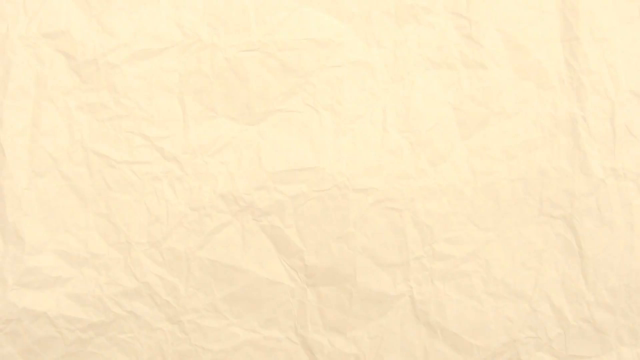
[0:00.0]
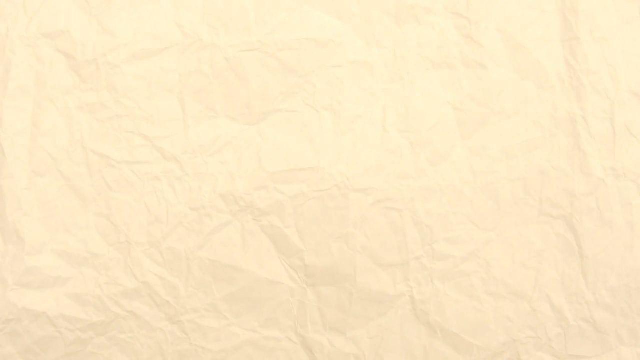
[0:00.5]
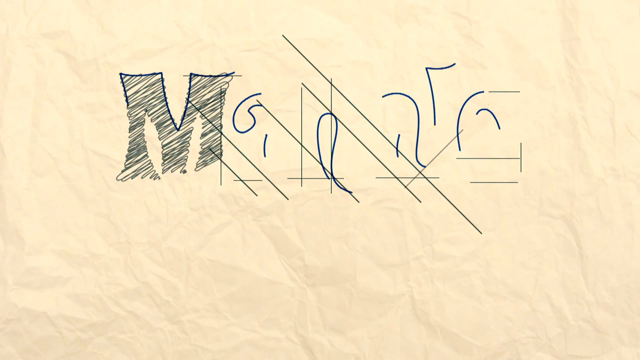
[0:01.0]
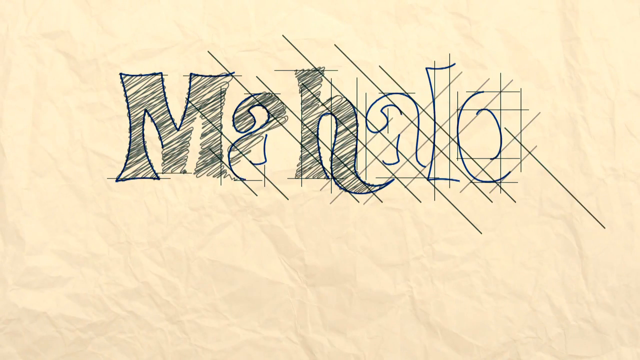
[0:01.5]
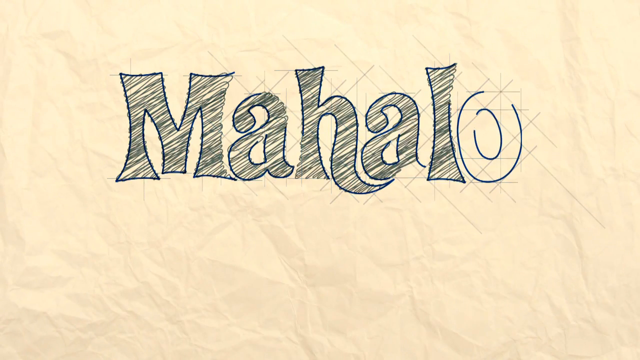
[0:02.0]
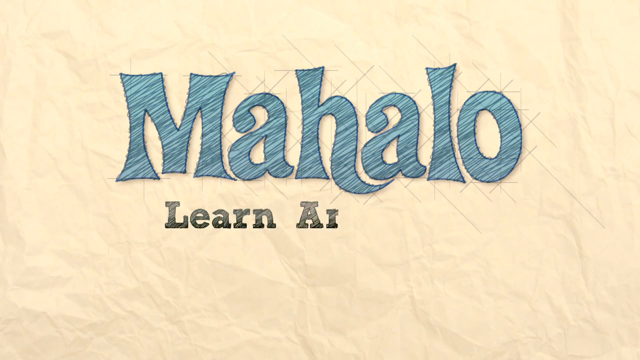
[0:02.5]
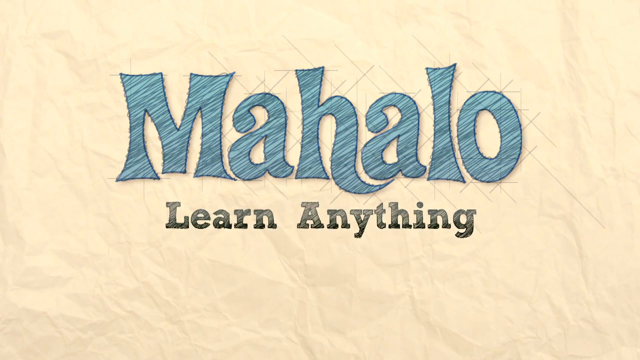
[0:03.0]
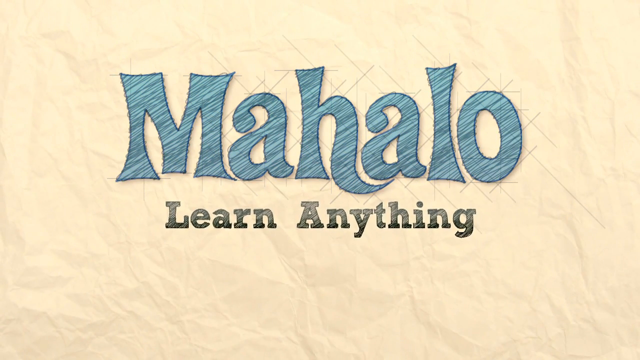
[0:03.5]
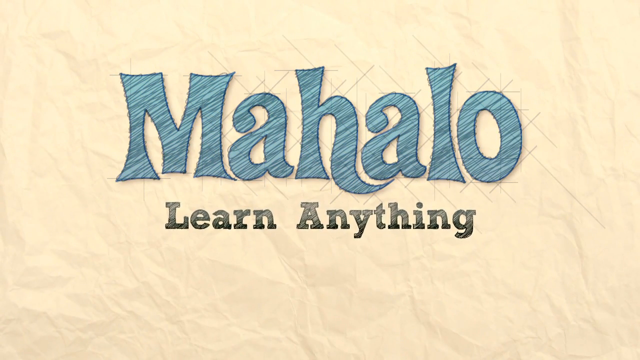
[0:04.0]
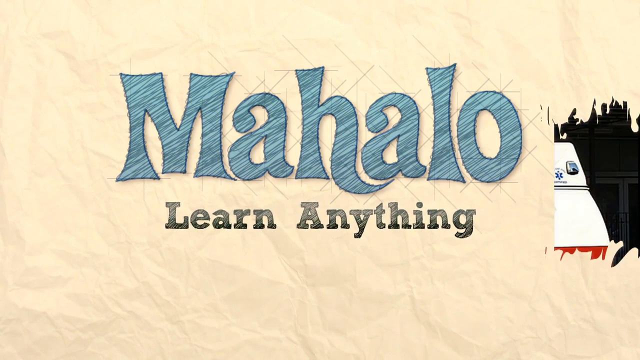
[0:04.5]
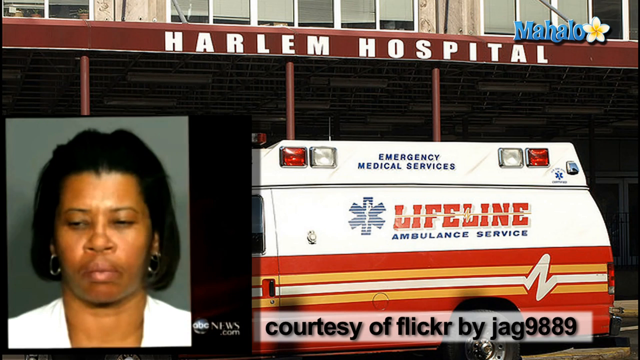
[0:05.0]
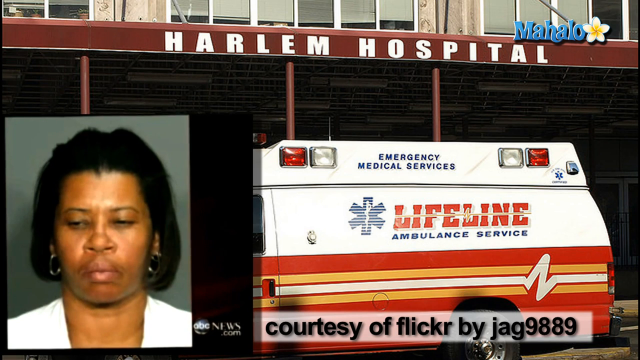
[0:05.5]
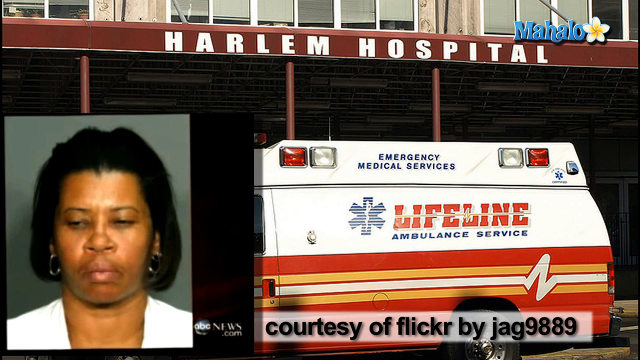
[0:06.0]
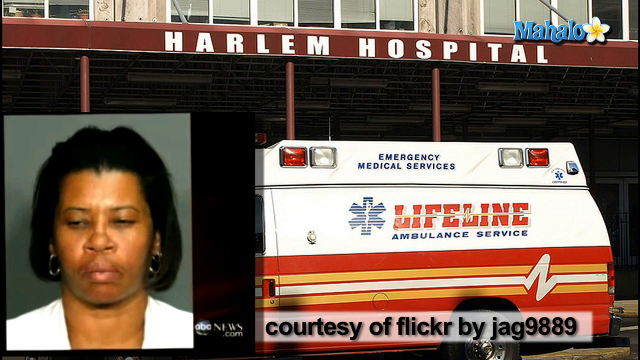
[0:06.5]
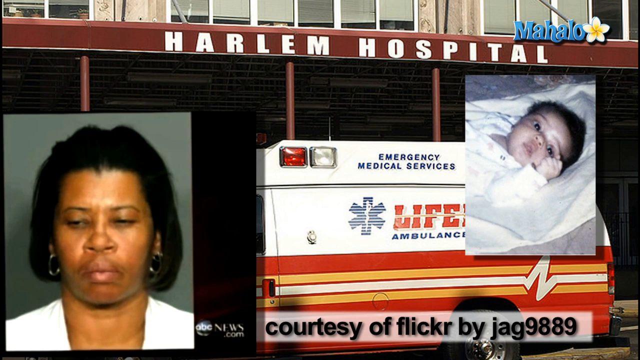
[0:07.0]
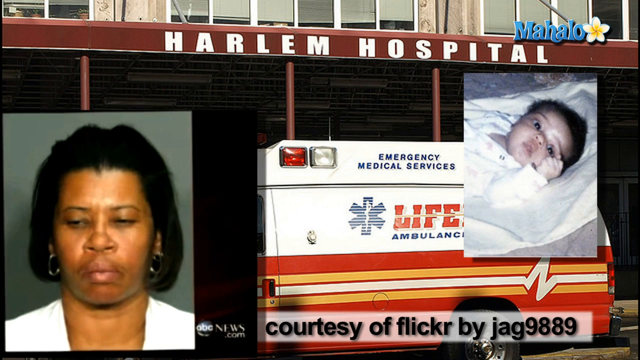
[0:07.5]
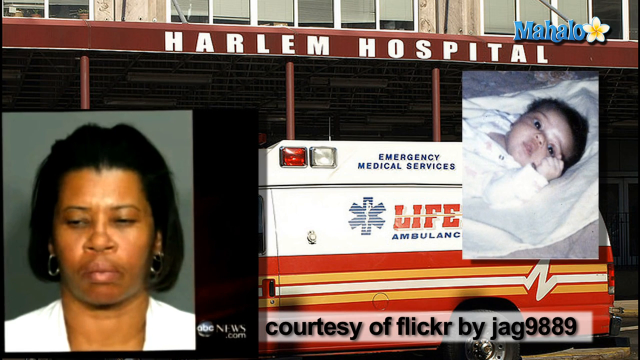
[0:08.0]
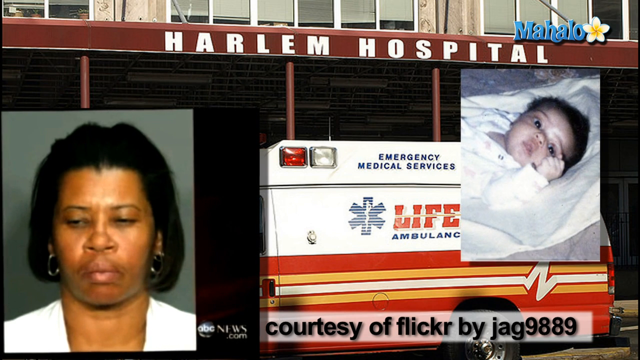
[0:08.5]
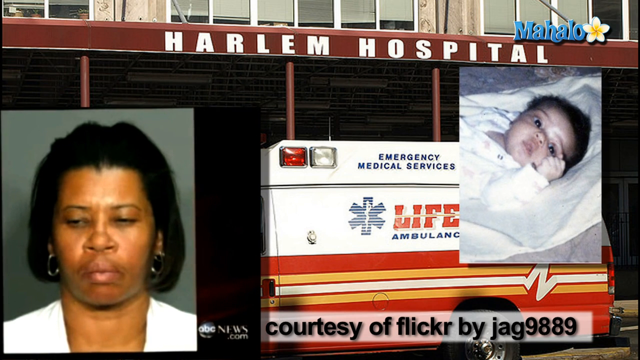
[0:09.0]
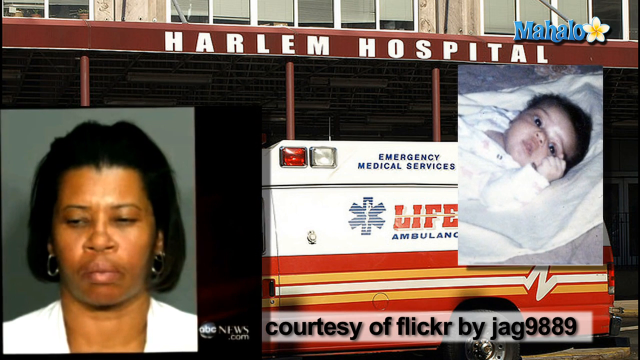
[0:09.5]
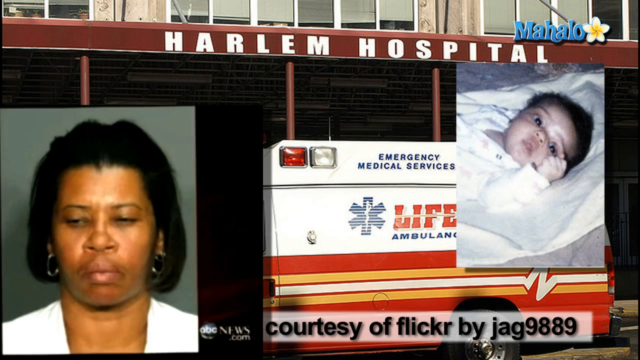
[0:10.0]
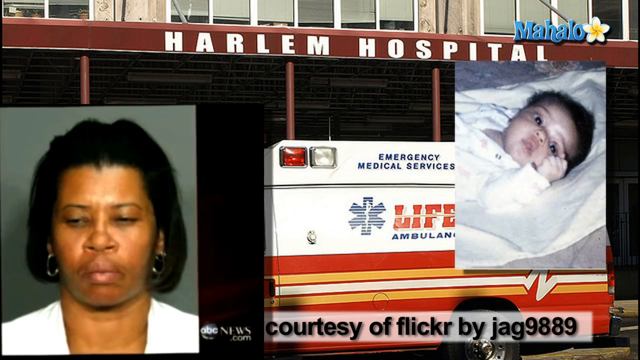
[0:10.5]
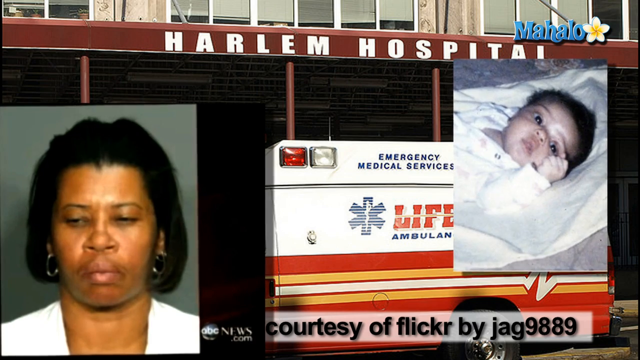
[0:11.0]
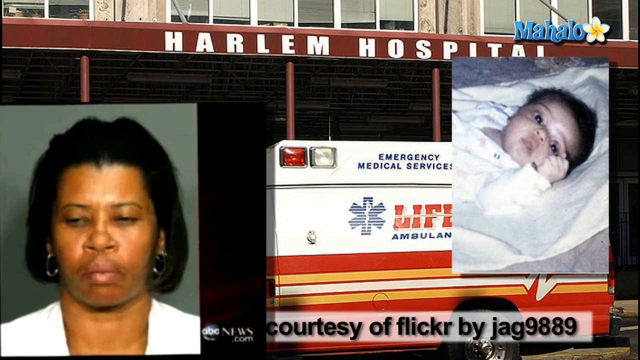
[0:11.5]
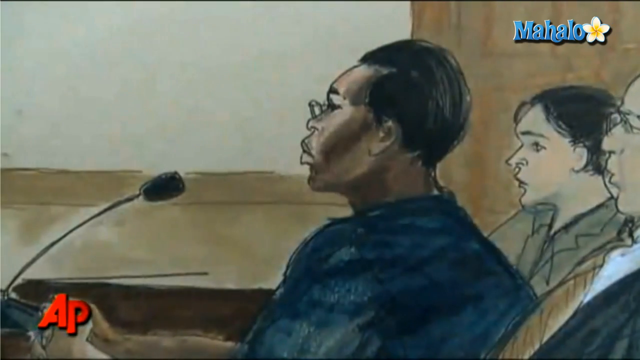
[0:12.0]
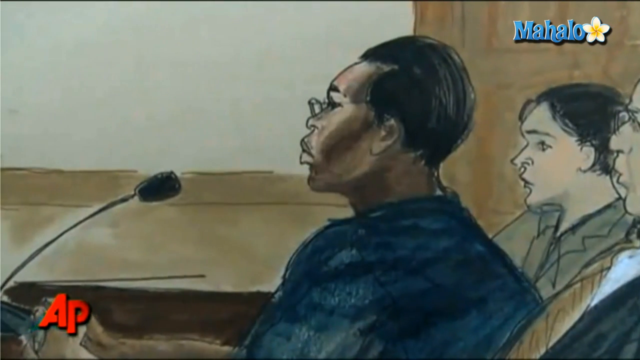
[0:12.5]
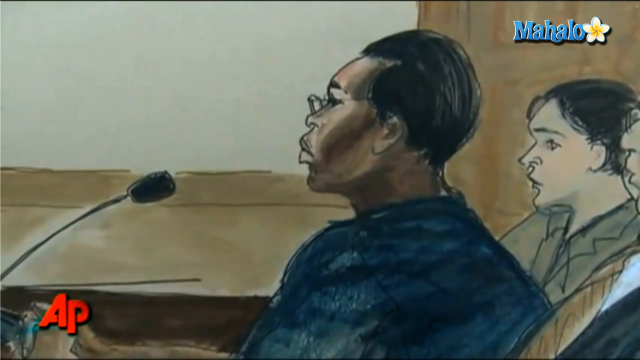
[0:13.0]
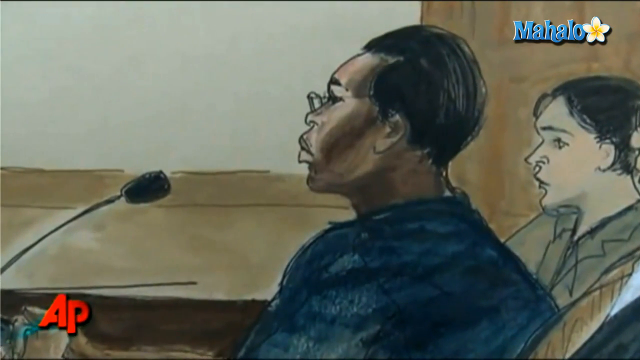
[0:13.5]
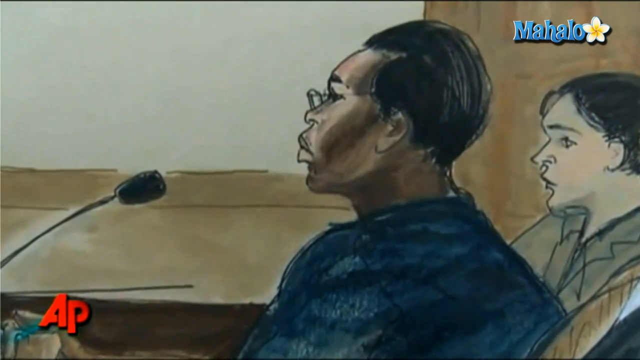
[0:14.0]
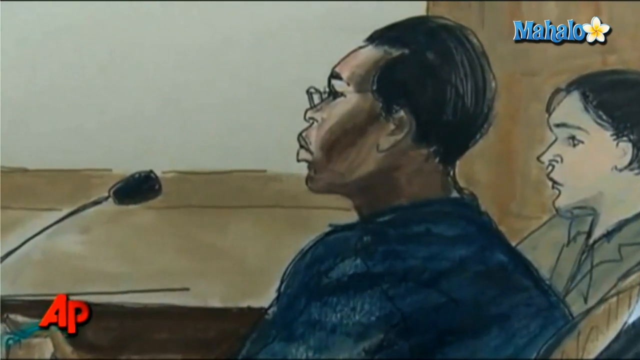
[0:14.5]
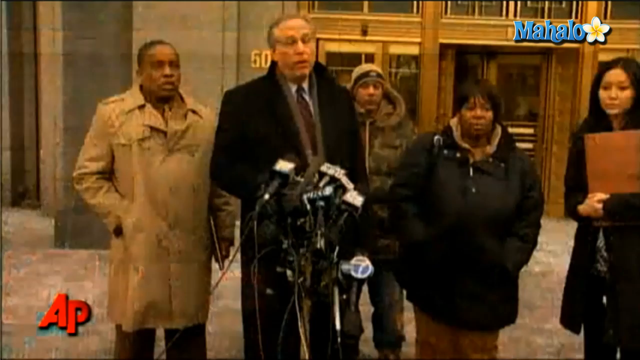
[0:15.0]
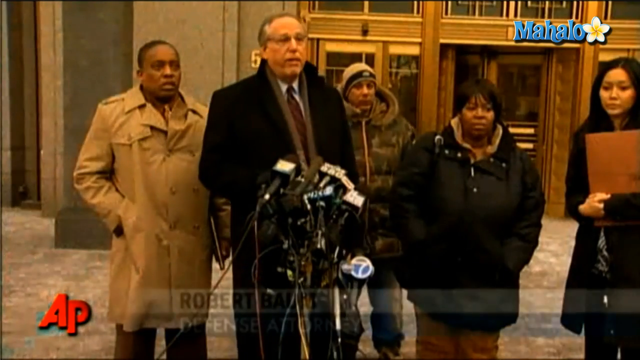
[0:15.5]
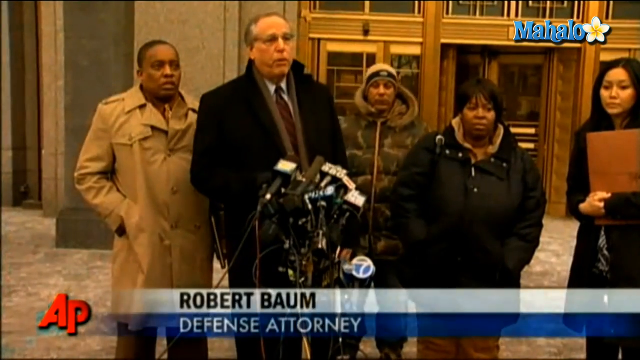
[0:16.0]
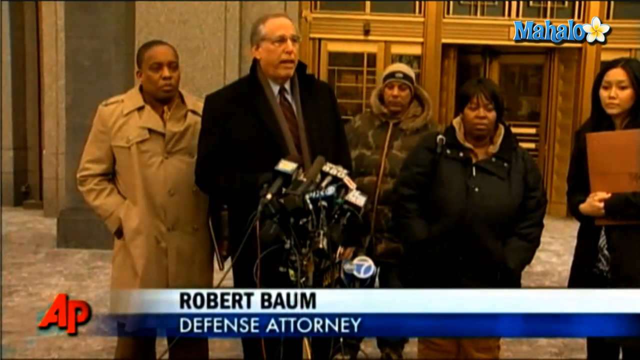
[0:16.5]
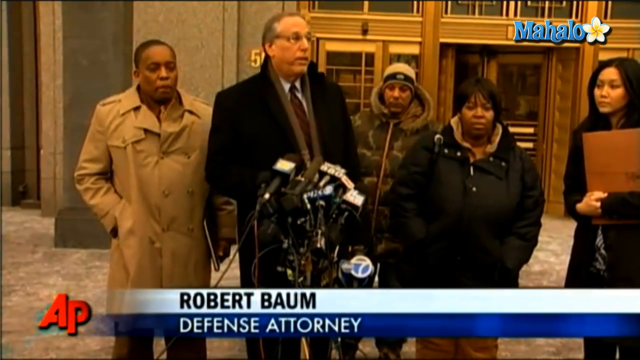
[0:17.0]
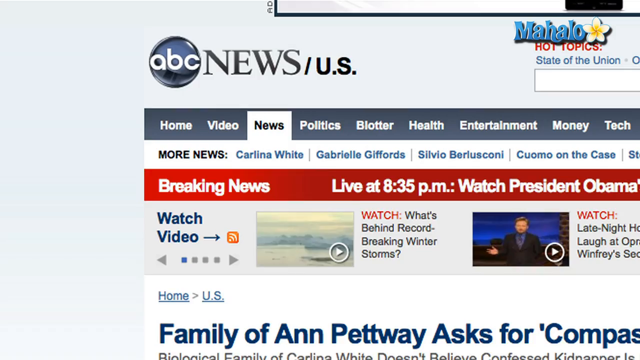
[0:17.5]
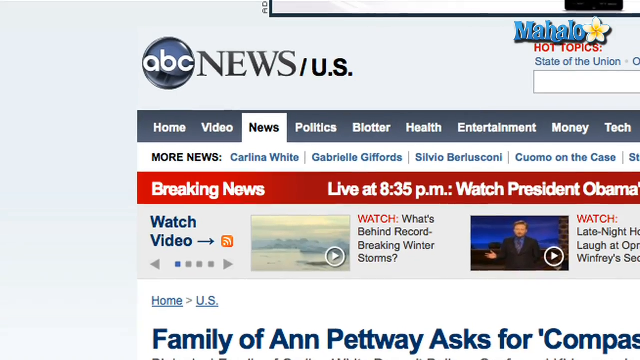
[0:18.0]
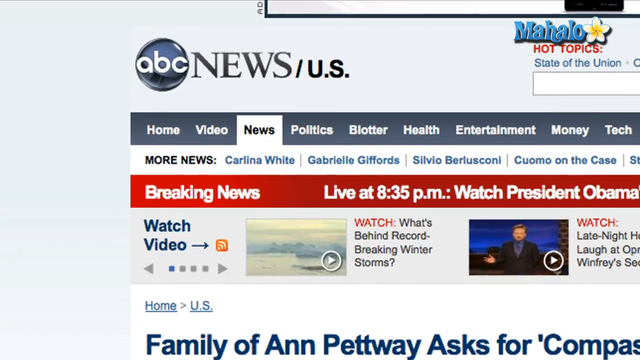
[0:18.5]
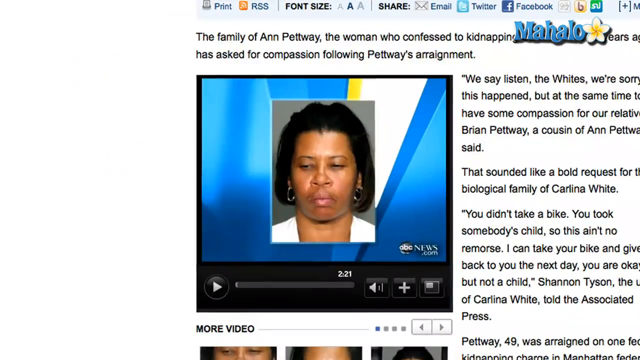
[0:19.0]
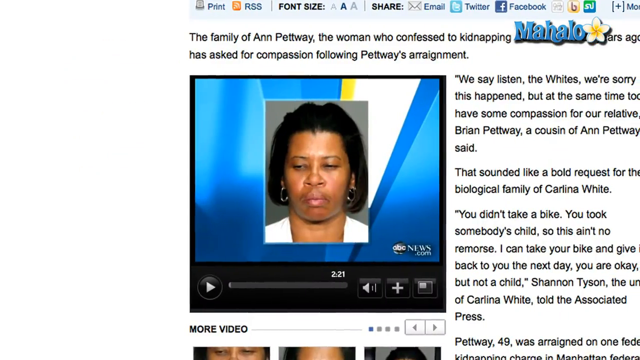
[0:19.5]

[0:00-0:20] The video opens on a screen with a crumpled paper background; the bottom of the screen is black and fades in a gradient up toward the crumpled paper texture. Lines appear, vertical and squiggly, and form the word "mahalo", which looks to have a hand-drawn effect, with a black outline and a blue fill with squiggled lines. Underneath it is the text "learn anything". The next scene is a still photograph of the exterior of a building with a sign that reads "Harlem Hospital", and below that is a parked ambulance. To the left is an inset photograph of a woman looking to the left. Another photograph then appears, more on the right side, of an infant looking at the camera. The scene shifts to a drawing of people presumably inside a courtroom, with the feel of a courtroom sketch. It then shifts to people standing outside a building, with one man in front wearing a suit jacket and a tie, talking to a group of microphones.